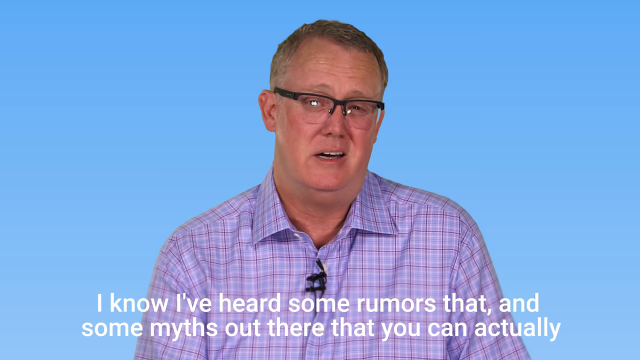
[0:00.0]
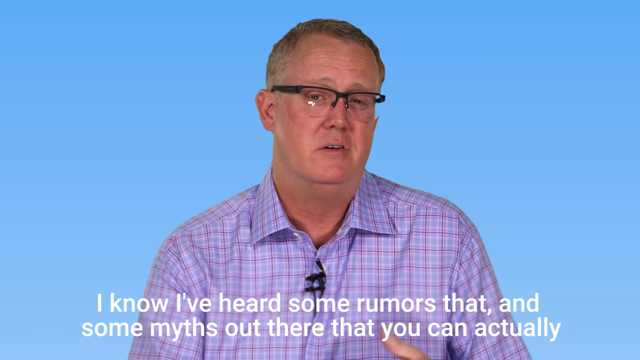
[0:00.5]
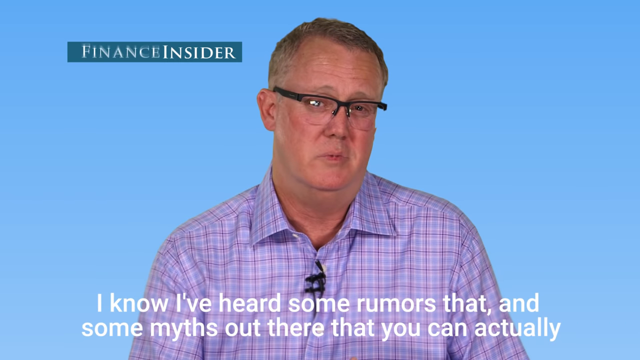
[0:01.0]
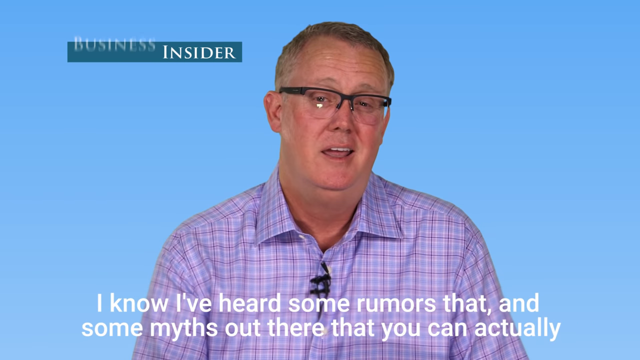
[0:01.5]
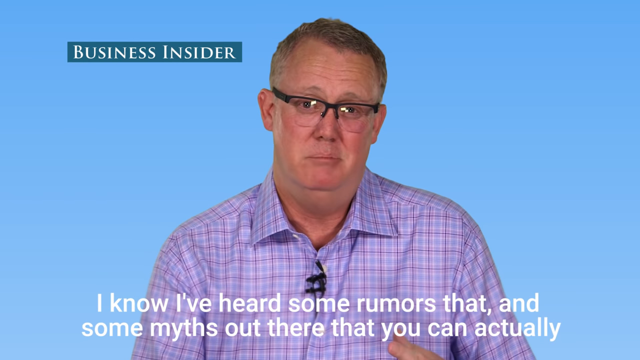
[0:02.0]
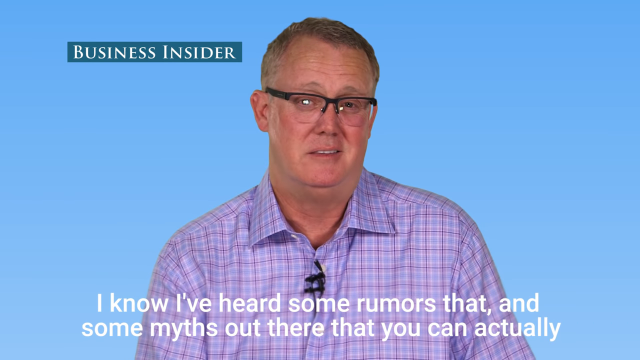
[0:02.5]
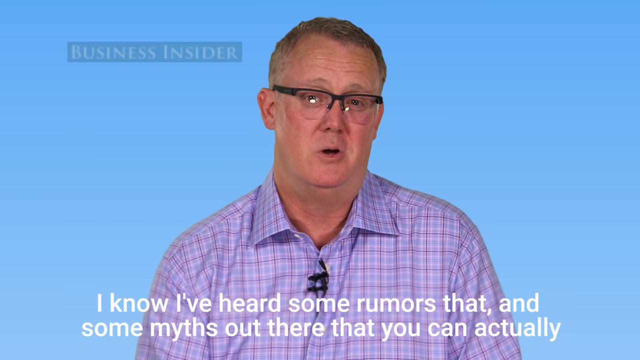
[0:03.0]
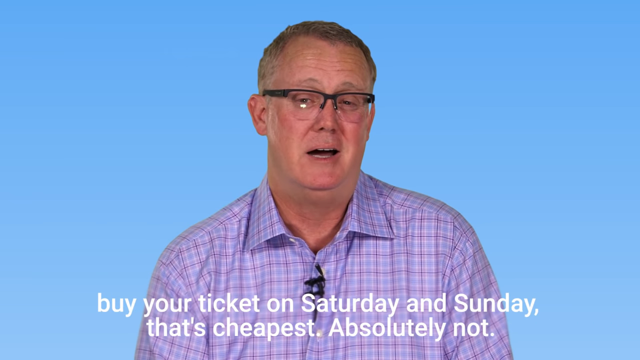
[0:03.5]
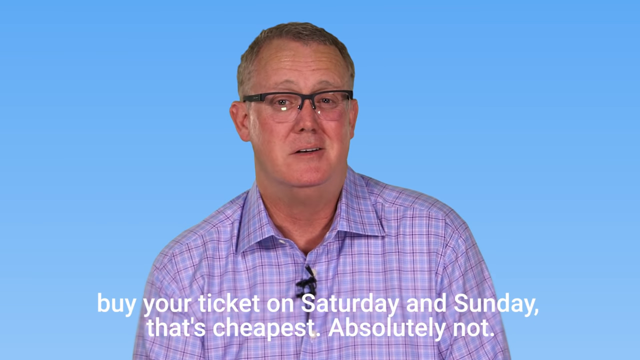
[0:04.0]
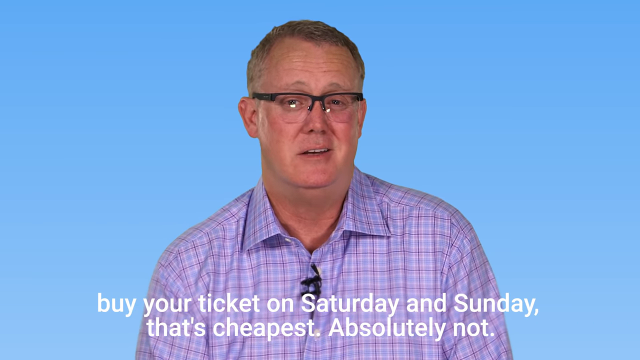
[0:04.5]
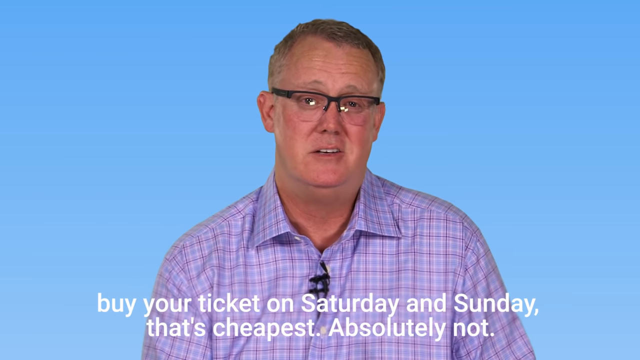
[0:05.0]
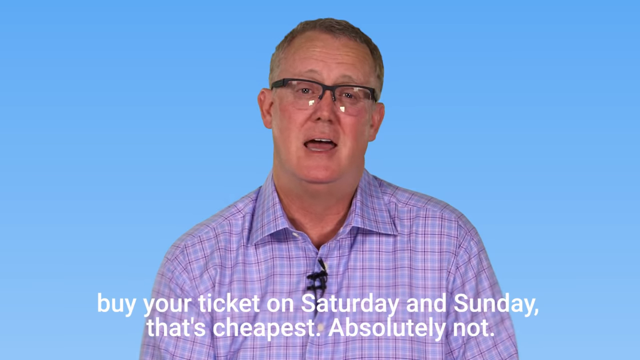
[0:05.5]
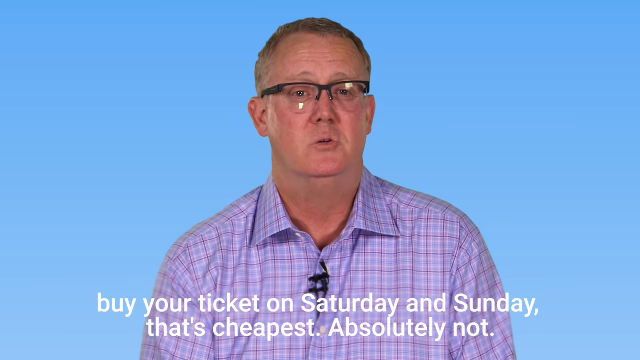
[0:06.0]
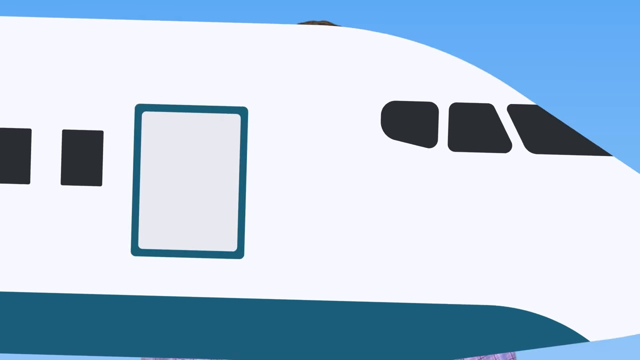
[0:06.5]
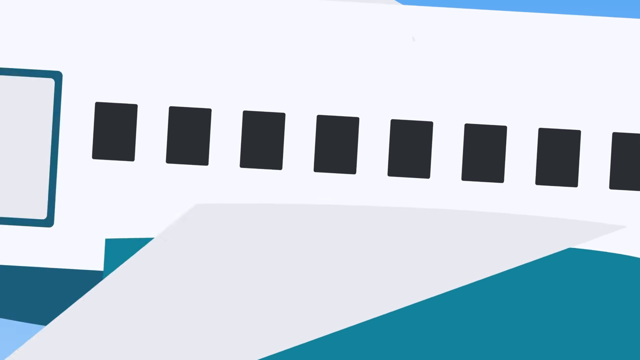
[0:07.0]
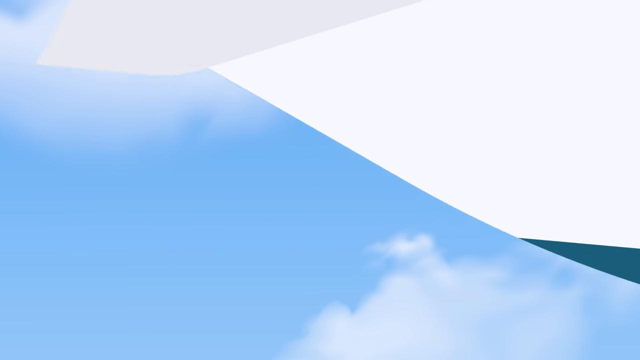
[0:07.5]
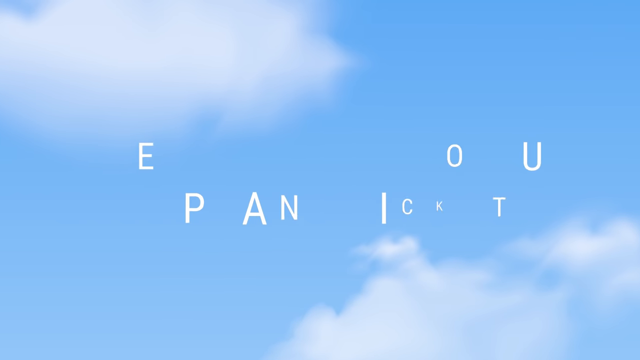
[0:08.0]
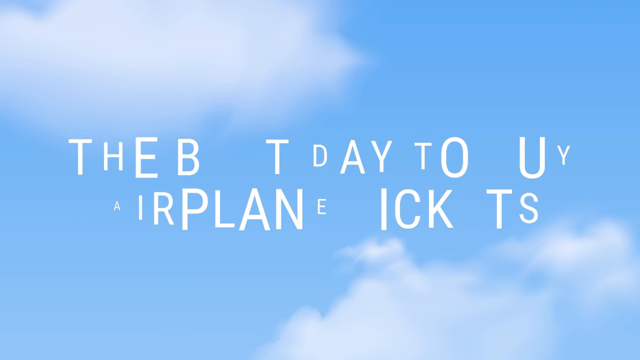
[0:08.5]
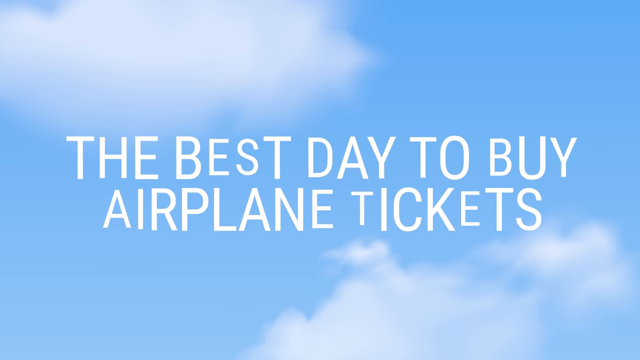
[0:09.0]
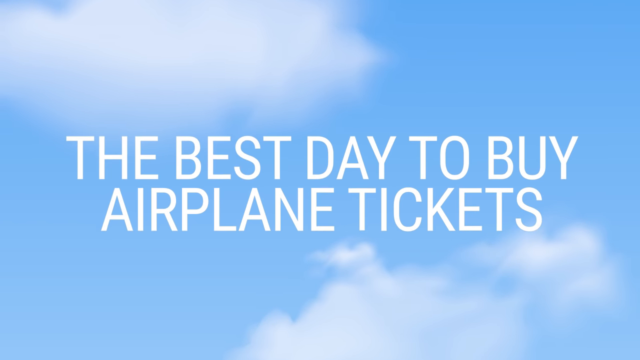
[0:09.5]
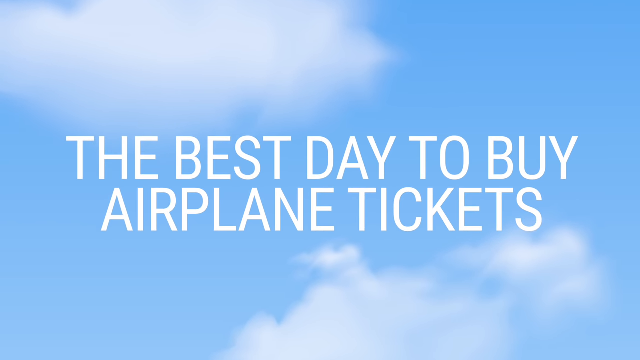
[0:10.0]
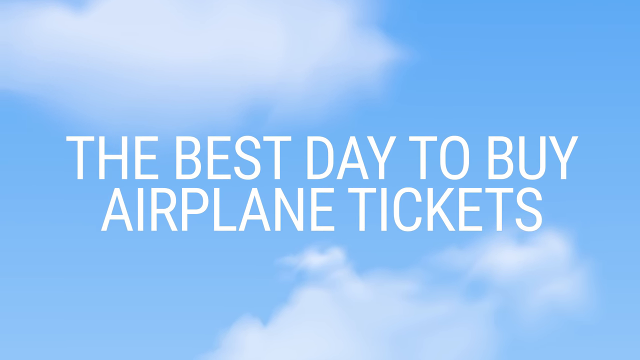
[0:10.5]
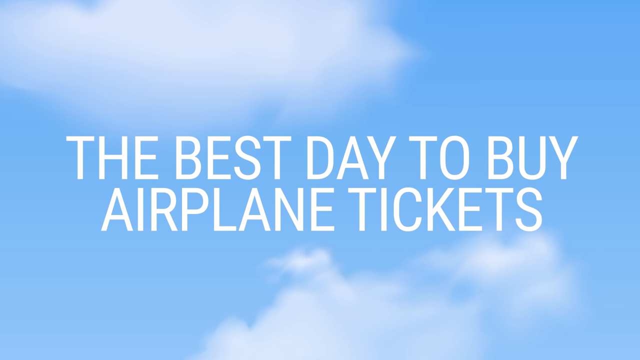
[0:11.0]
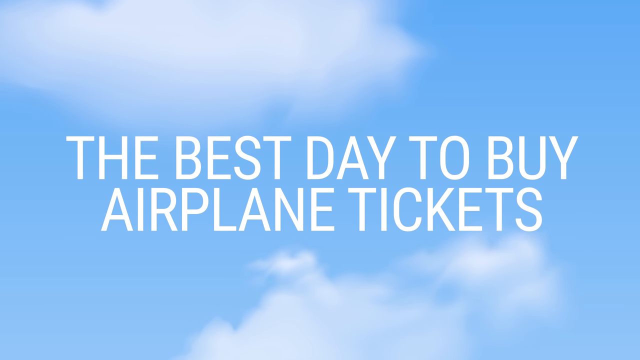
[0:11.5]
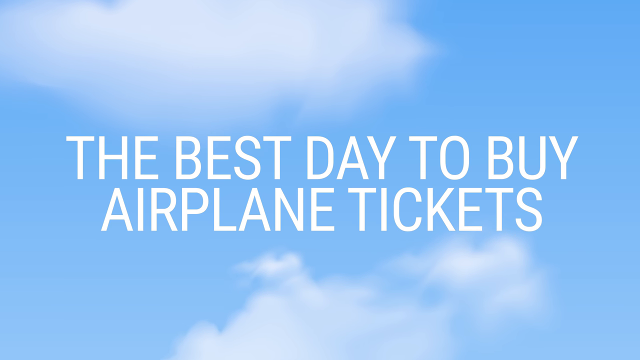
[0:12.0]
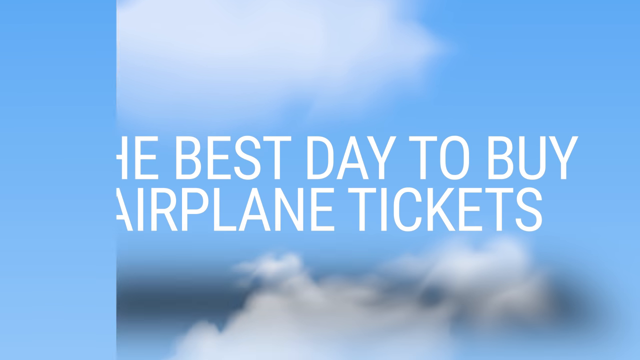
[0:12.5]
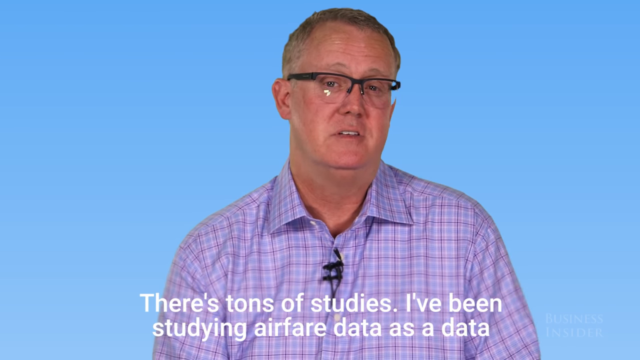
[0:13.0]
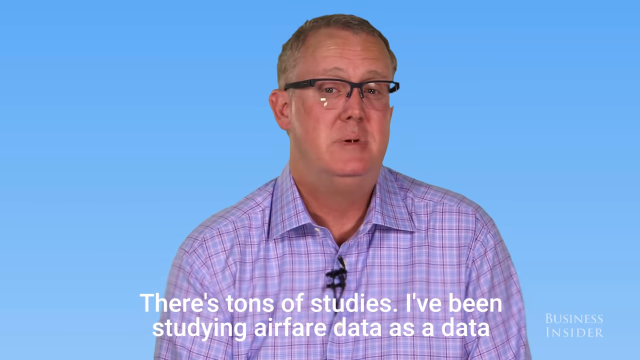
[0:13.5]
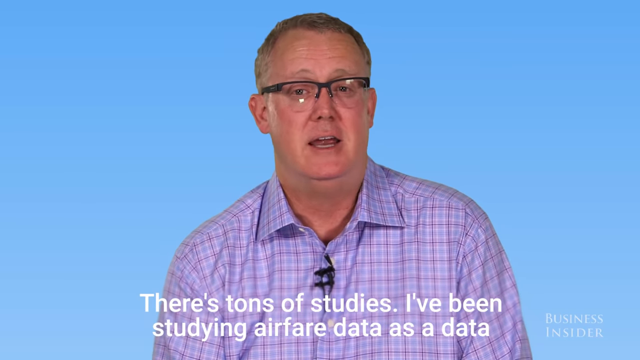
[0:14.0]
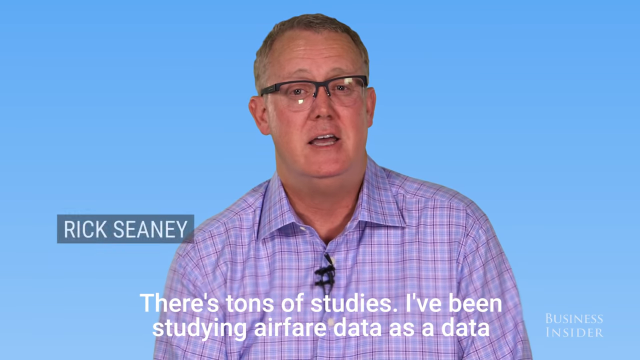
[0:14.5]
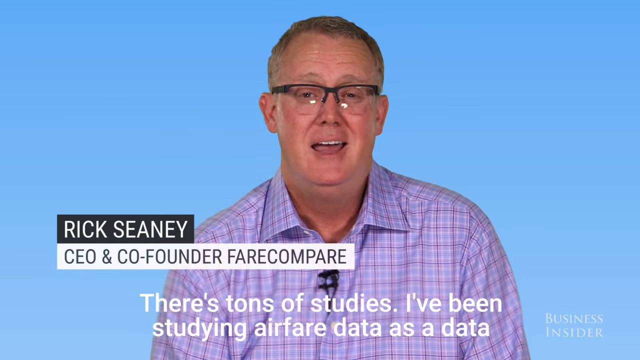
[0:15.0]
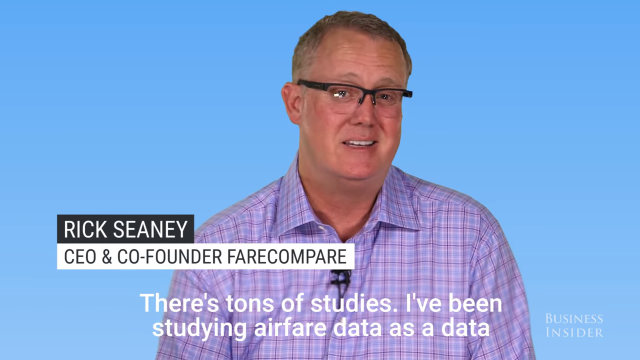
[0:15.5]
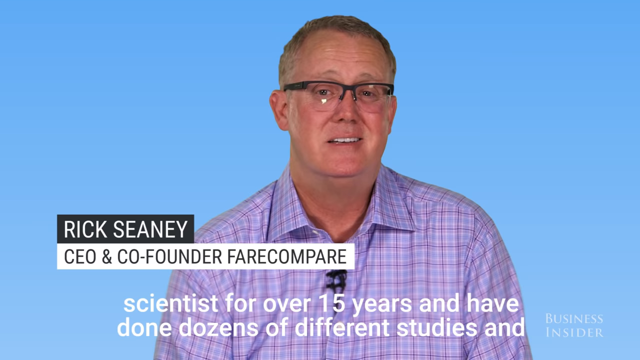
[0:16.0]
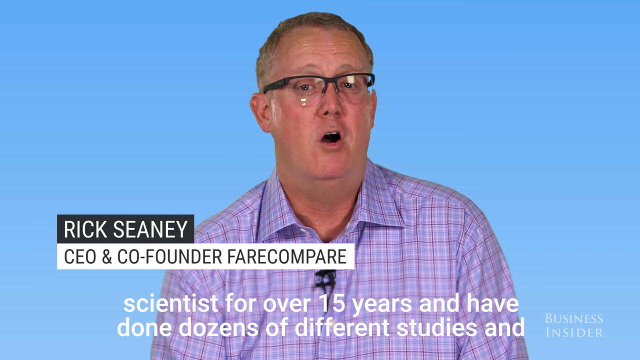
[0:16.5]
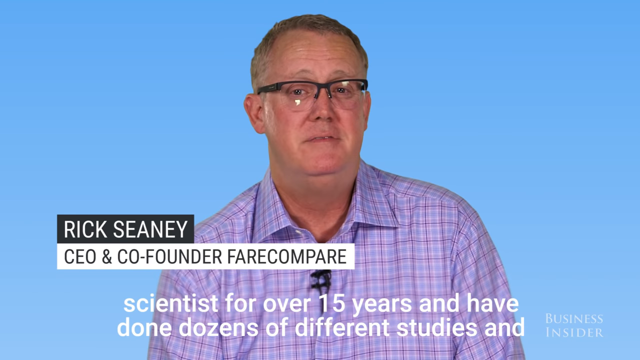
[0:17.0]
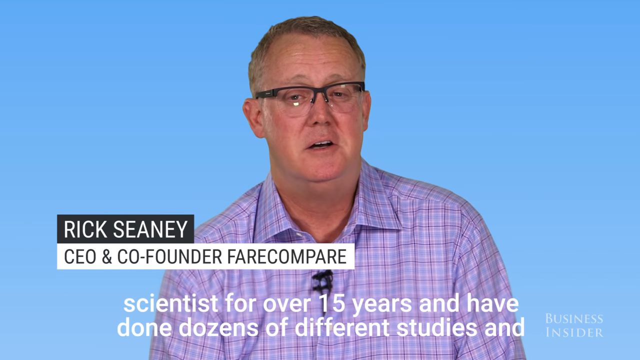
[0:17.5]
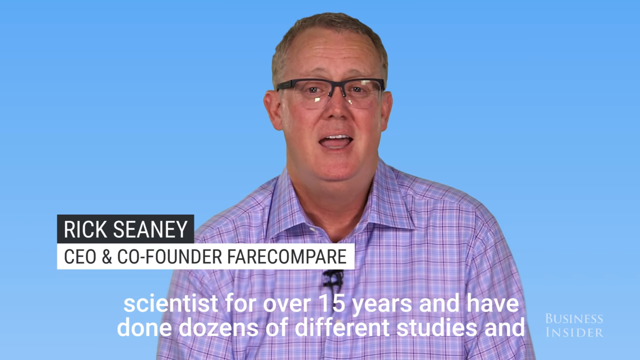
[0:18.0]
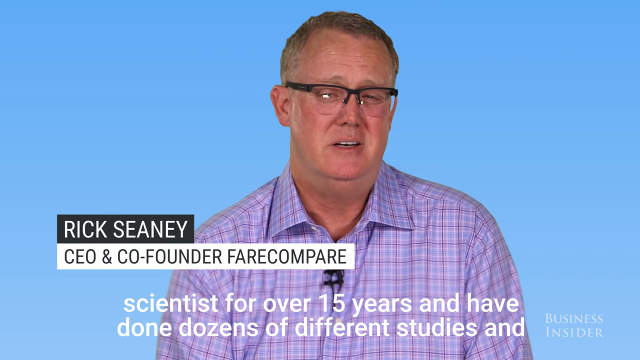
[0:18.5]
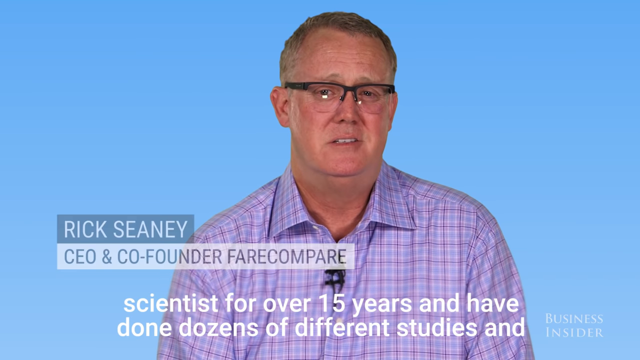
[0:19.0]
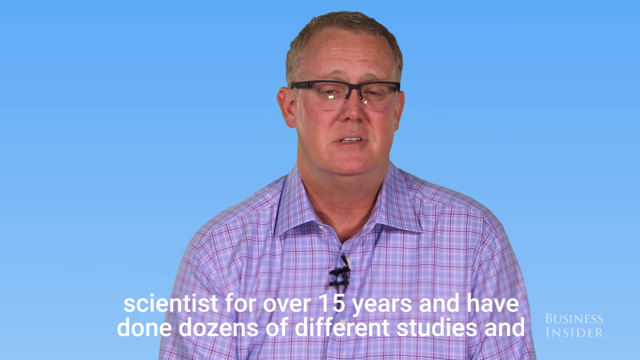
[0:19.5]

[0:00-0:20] A man talks on screen in a video from The Business Insider titled "The best day to buy airplane tickets." White subtitles at the bottom of the screen read: "I know I've heard some rumors that, and some myths out there, that you can actually buy, buy your tickets on Saturday and Sunday. That's cheapest. Absolutely not. There's tons of studies. I've been studying airfare data as a data scientist for over 15 years and have done dozens of different studies." The man giving the interview is named Rick Shawney, the CEO and co-founder of Air Compare. He wears clear glasses with black frames and a button-up shirt with a checkered pattern in light blue, white, and red.